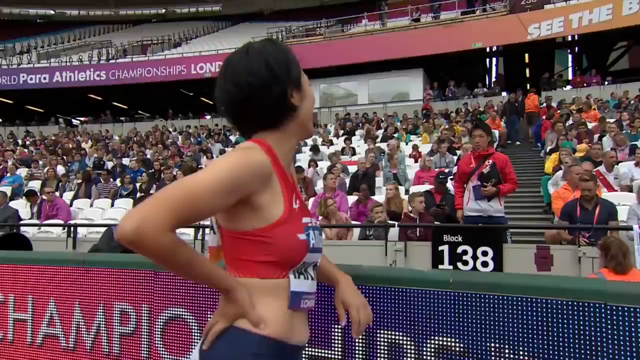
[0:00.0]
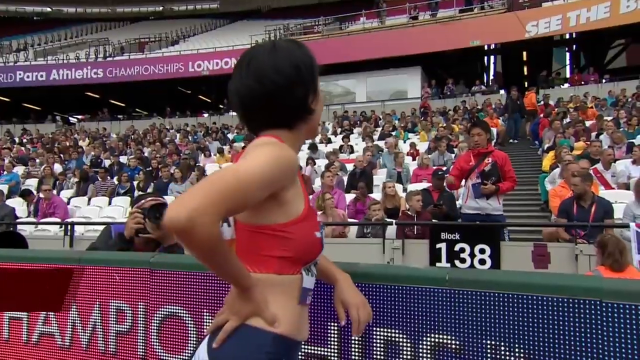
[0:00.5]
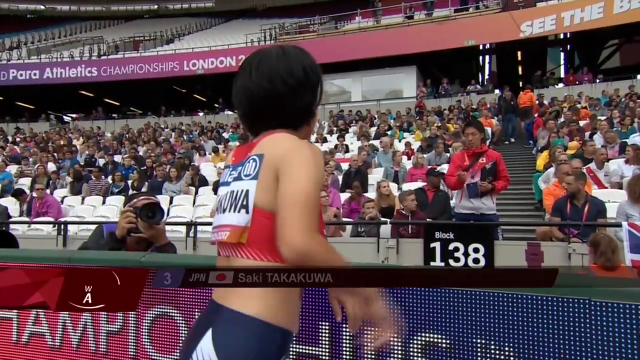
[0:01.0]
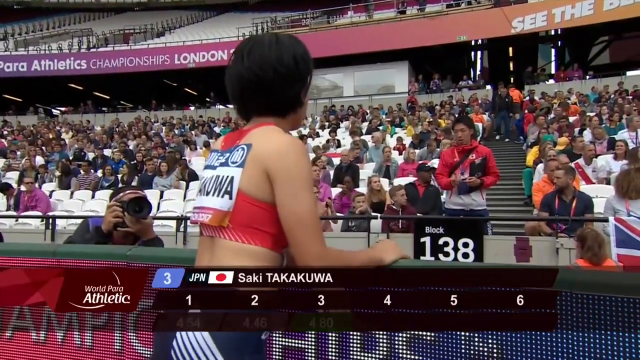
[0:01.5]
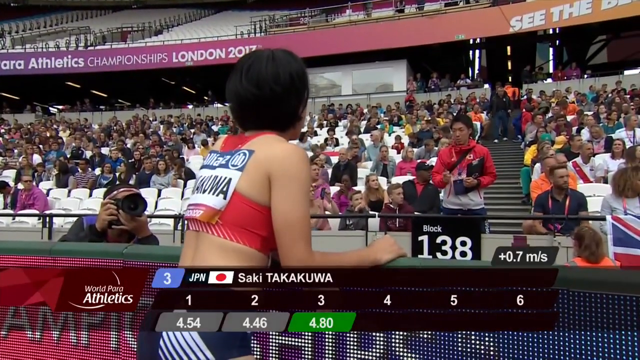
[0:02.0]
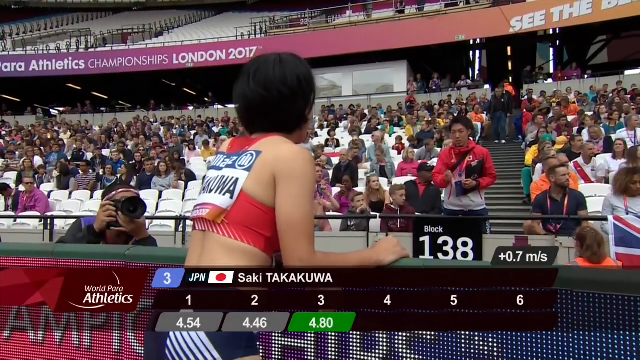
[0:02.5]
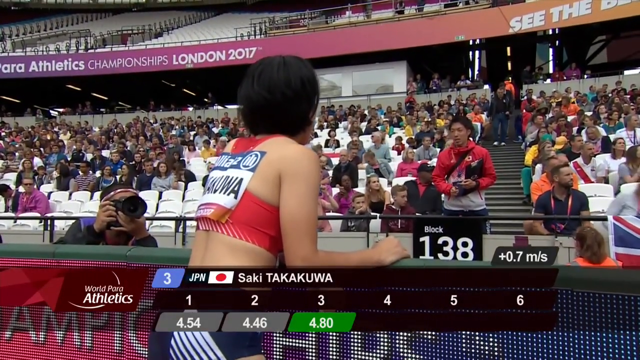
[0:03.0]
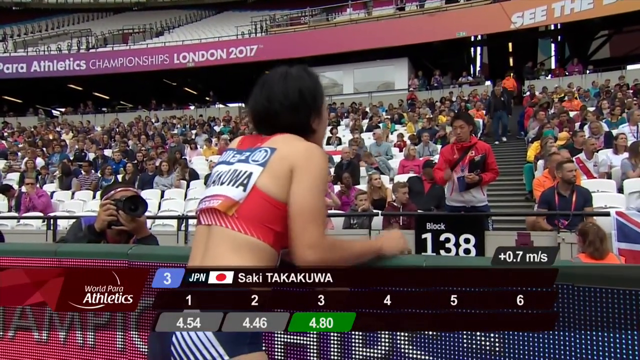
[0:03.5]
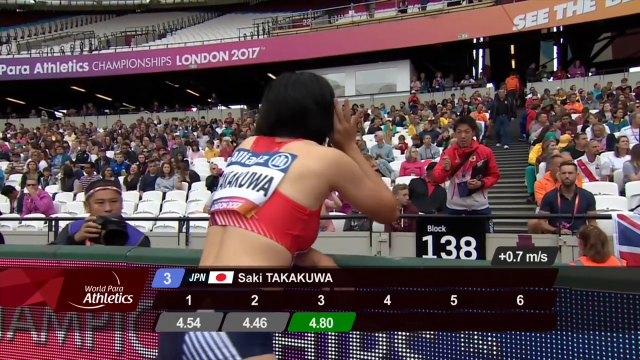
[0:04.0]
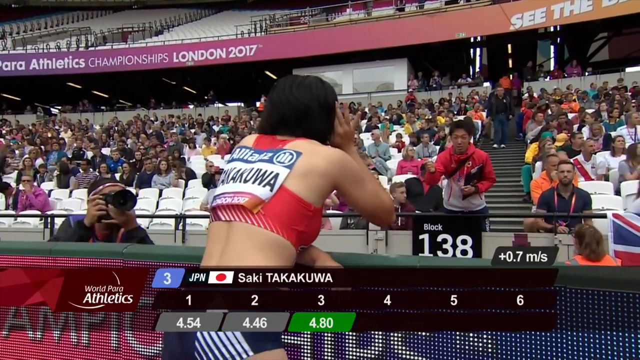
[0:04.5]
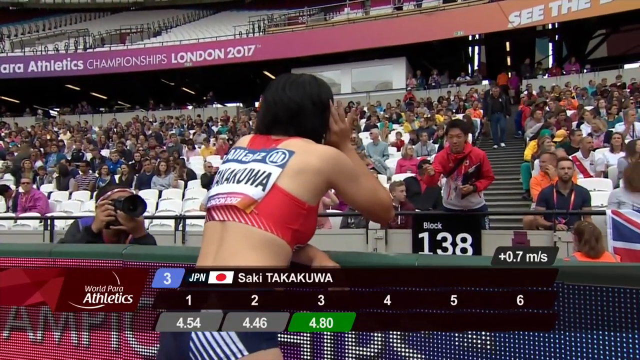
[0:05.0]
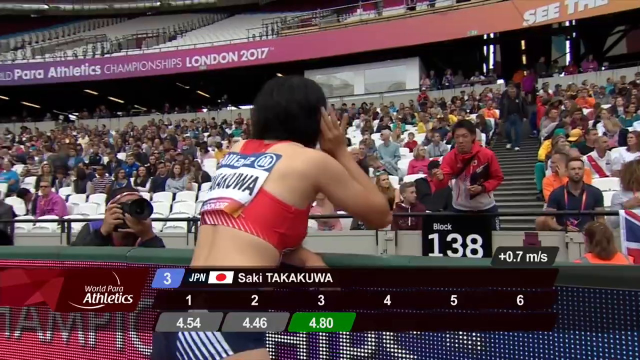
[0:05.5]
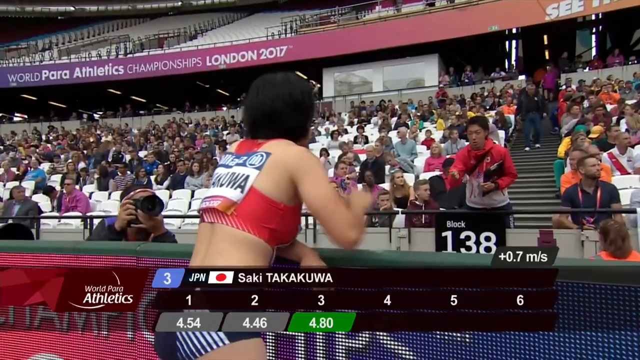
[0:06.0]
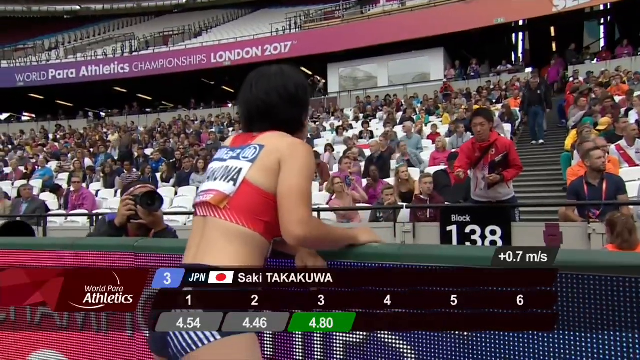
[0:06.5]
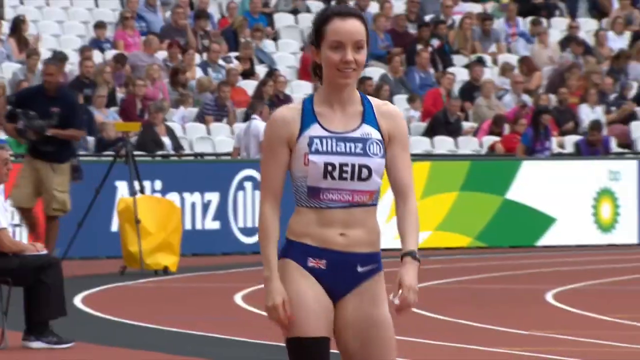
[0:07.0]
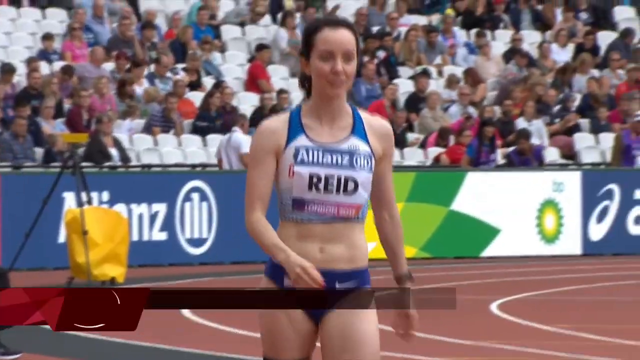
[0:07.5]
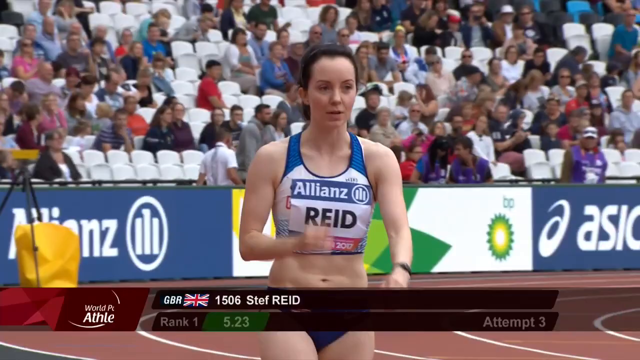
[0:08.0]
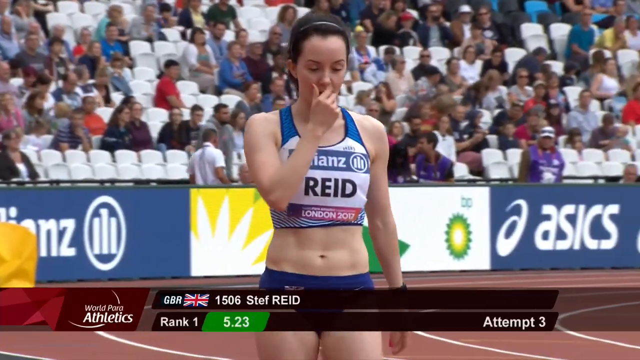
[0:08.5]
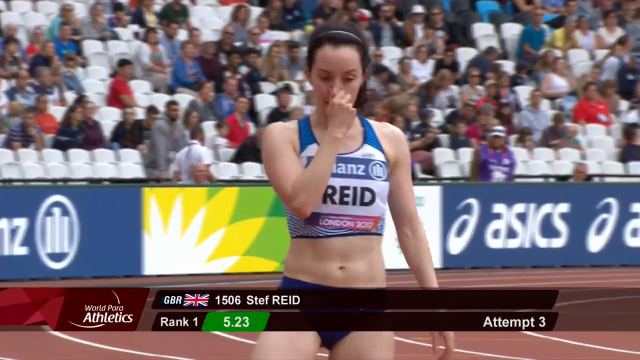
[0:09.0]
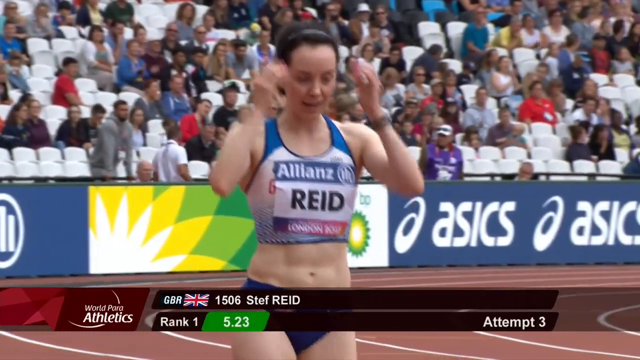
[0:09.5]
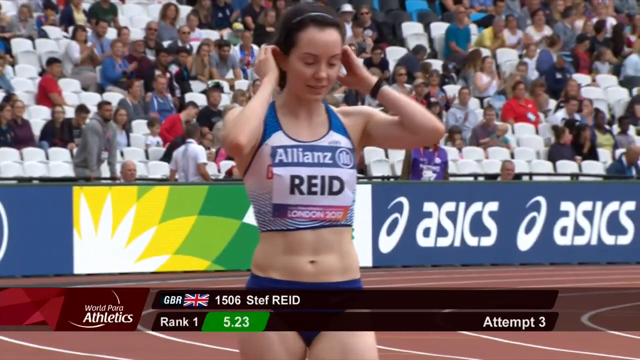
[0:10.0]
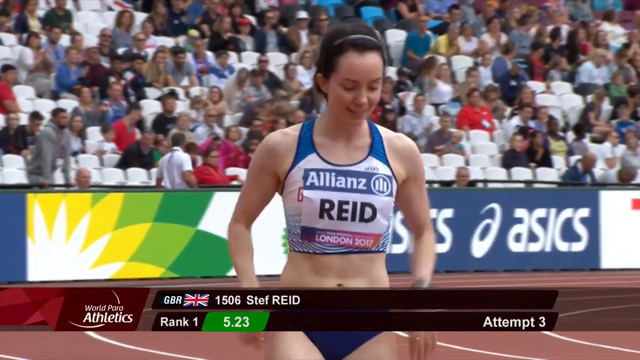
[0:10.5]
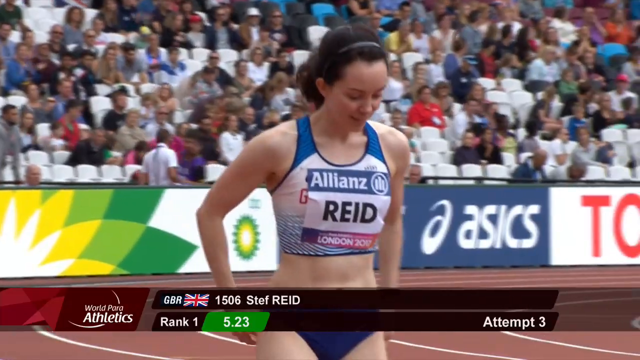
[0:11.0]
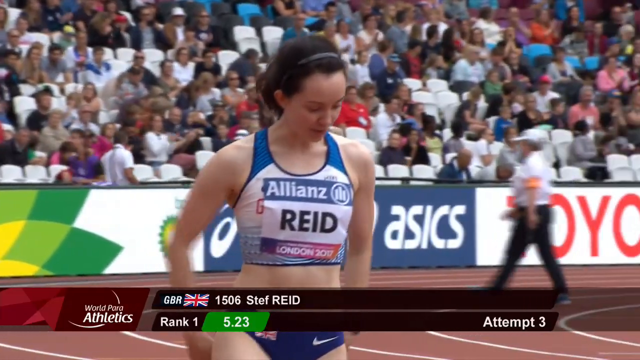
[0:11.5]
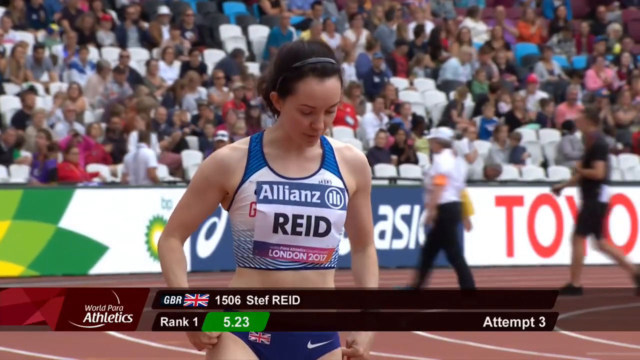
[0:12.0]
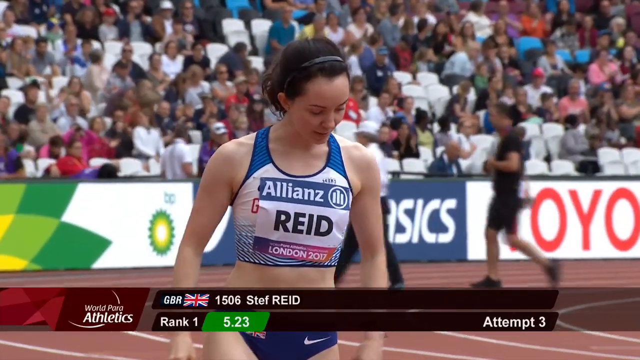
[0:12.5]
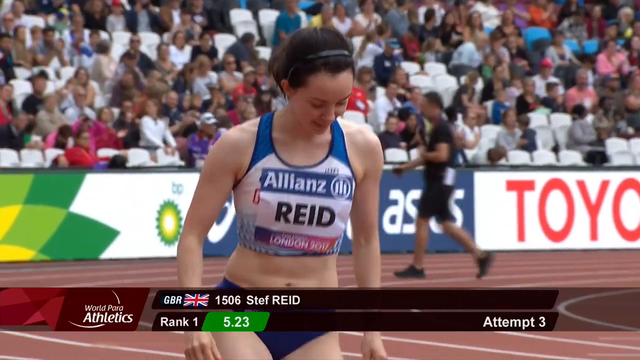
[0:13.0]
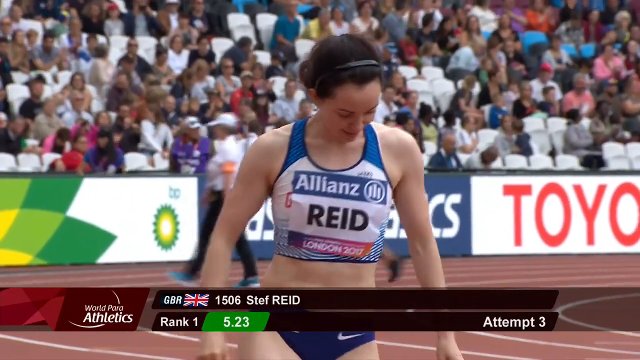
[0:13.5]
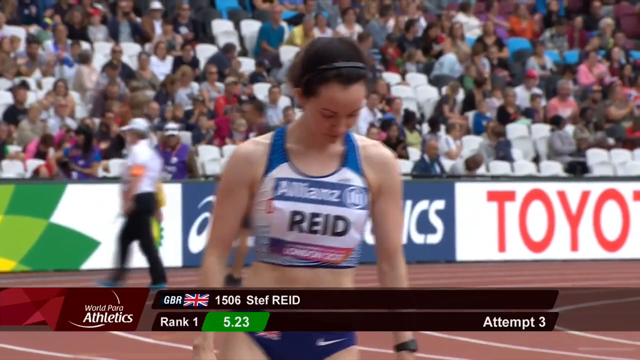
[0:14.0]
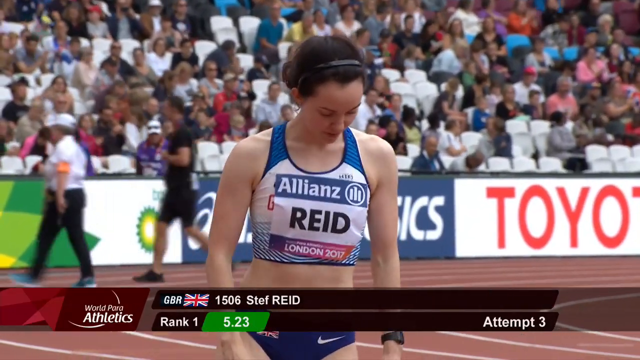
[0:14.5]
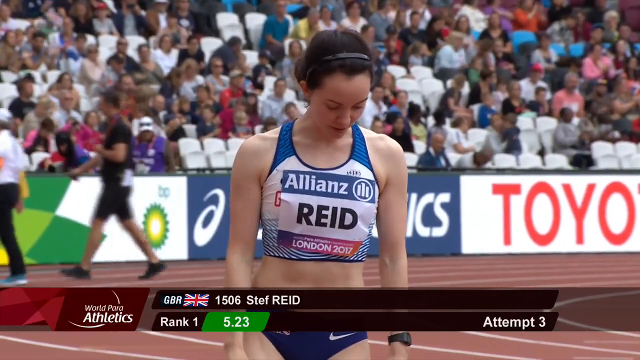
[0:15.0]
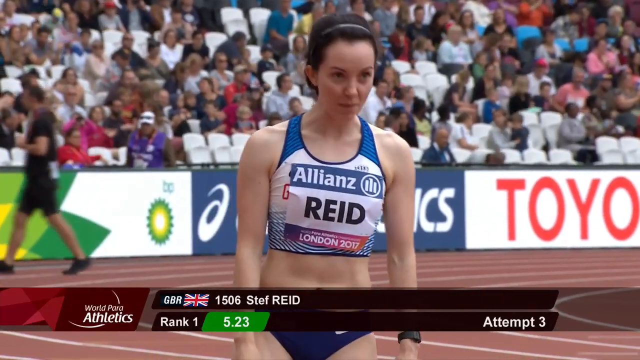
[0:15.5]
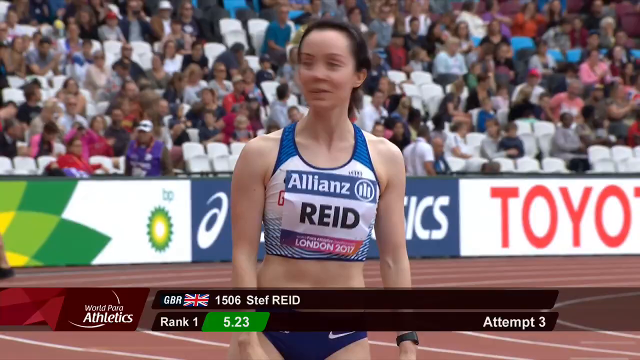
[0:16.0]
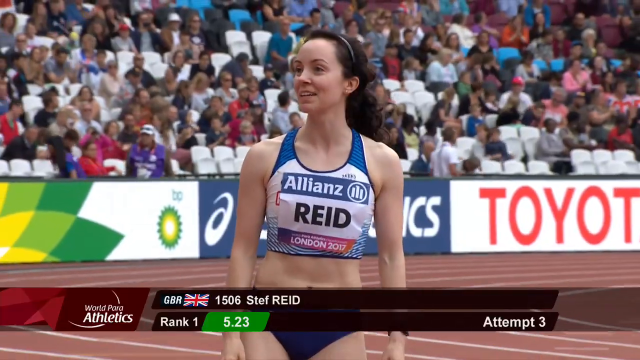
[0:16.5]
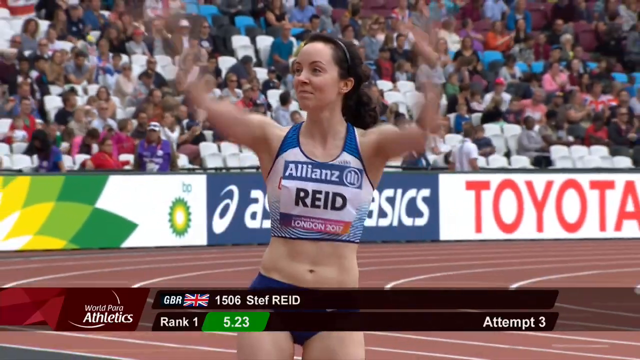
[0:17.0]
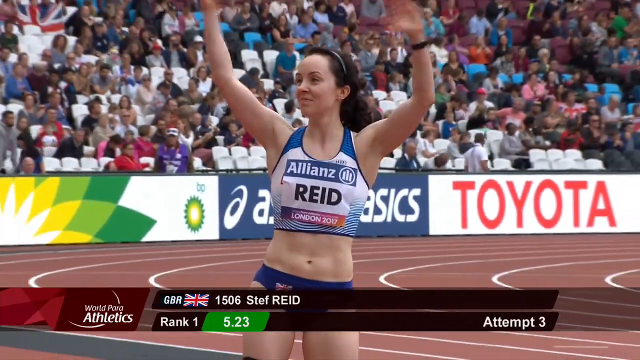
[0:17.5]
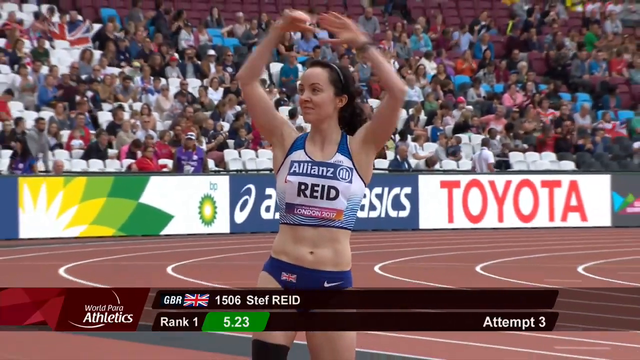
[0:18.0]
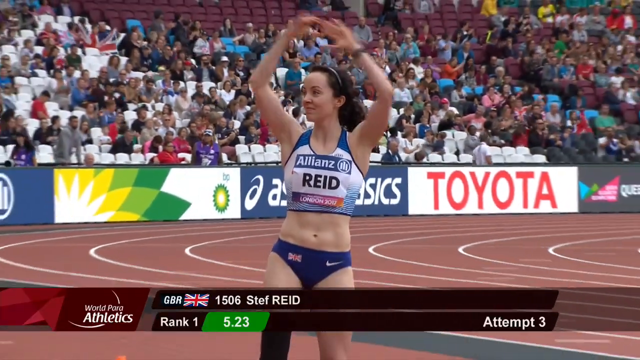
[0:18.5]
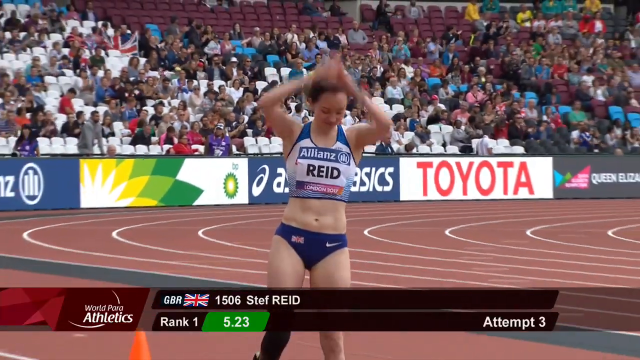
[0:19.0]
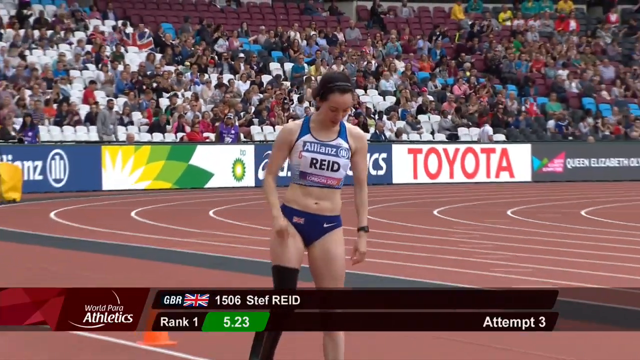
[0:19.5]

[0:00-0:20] A sports video opens on a woman in a red top standing at the side of a track, looking into the crowd. At the edge of the stadium a man is talking to her, and she raises her hand and holds it beside her ear as if trying to hear his words better. The video then shows a different woman walking out onto the track before her race, shaking her legs to loosen them up. The crowd behind her is cheering, and it looks like she is standing on the starting block. She turns to the crowd, puts her hands above her head and claps while looking at the crowd and smiling.